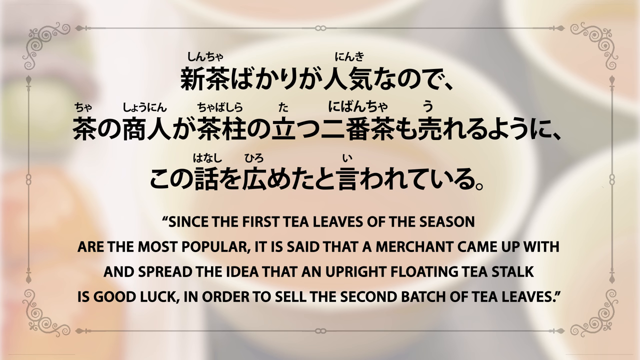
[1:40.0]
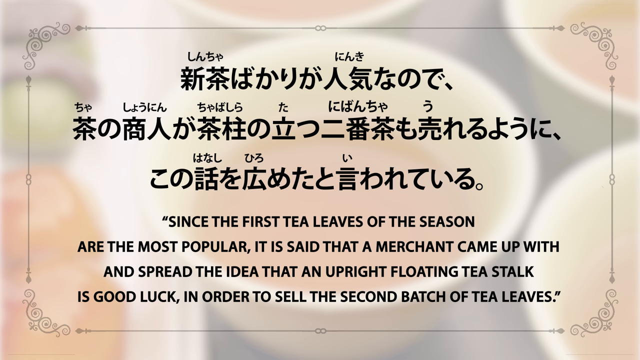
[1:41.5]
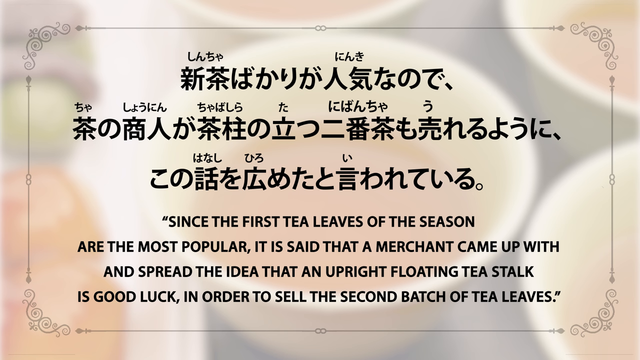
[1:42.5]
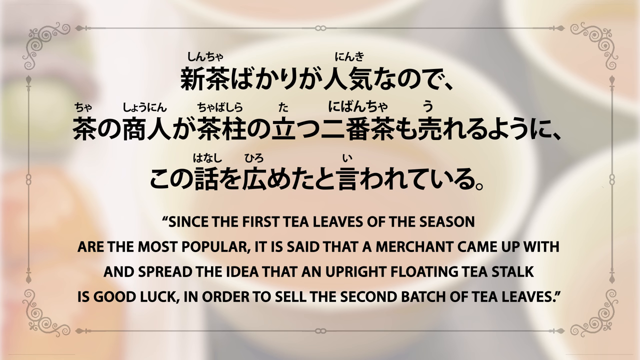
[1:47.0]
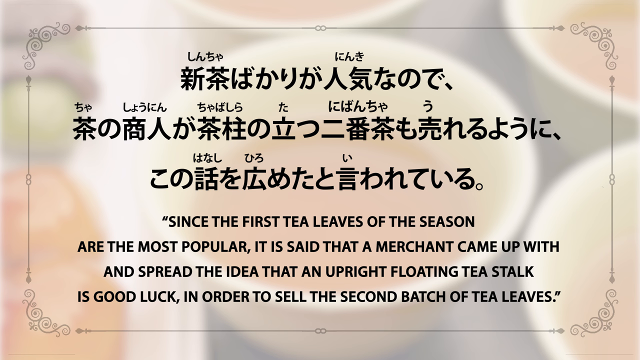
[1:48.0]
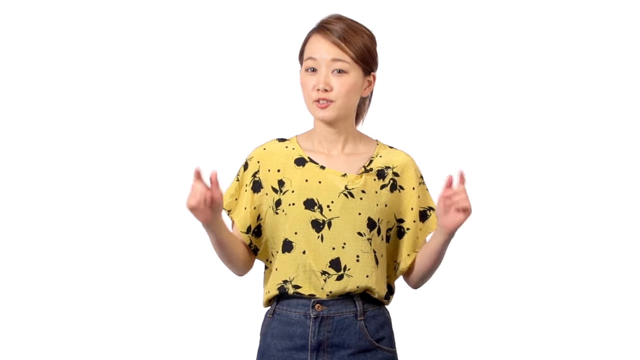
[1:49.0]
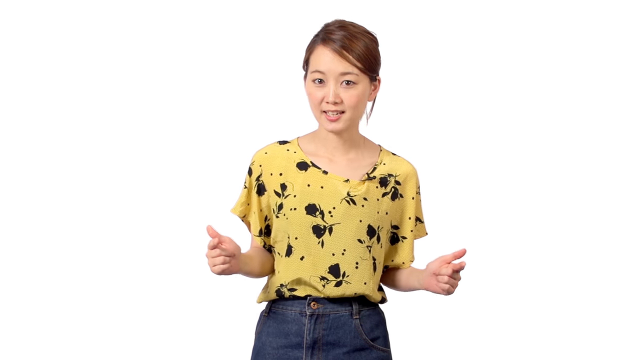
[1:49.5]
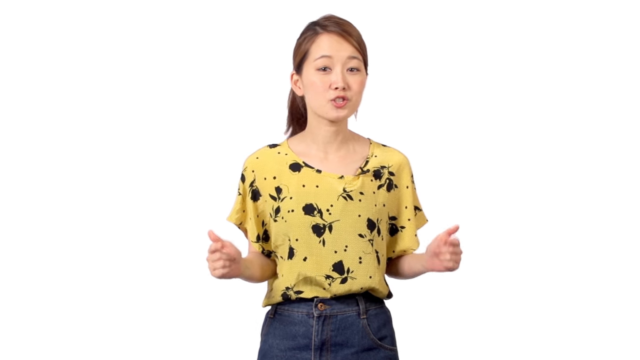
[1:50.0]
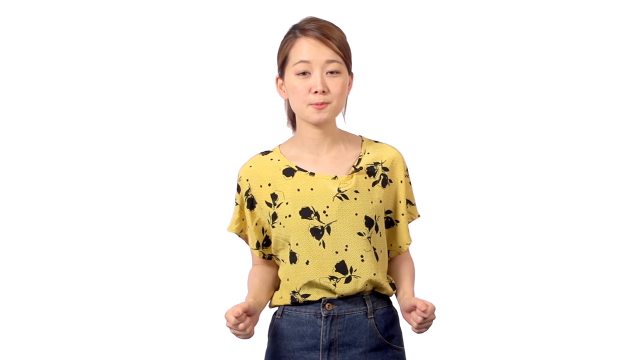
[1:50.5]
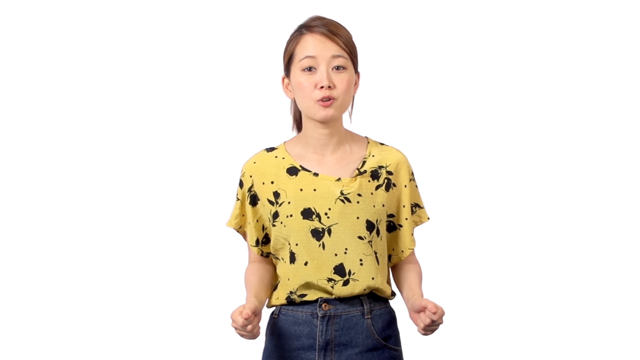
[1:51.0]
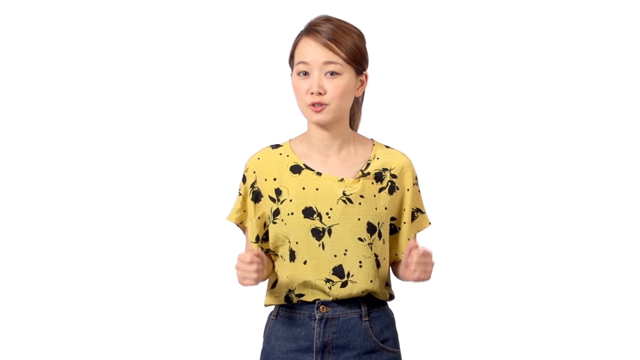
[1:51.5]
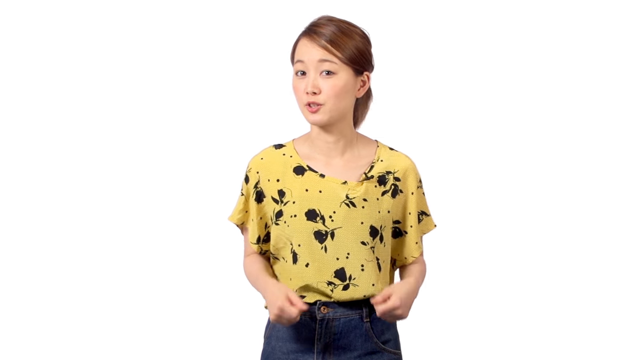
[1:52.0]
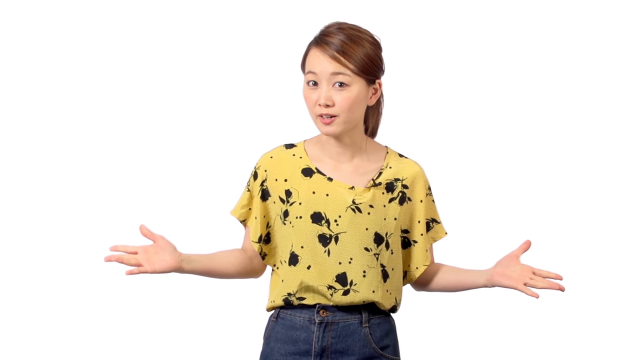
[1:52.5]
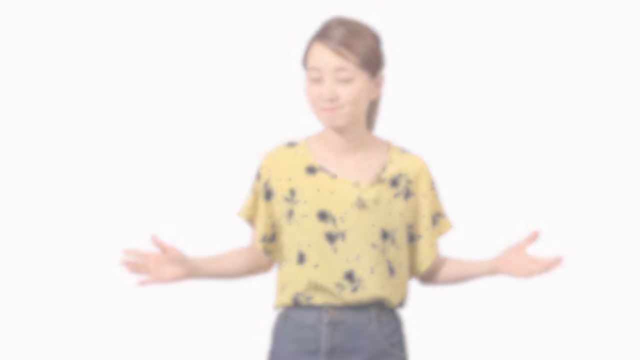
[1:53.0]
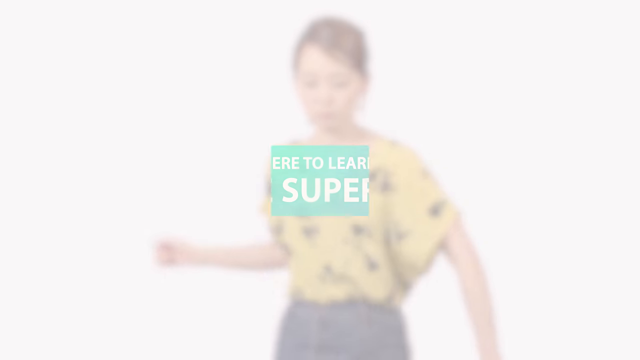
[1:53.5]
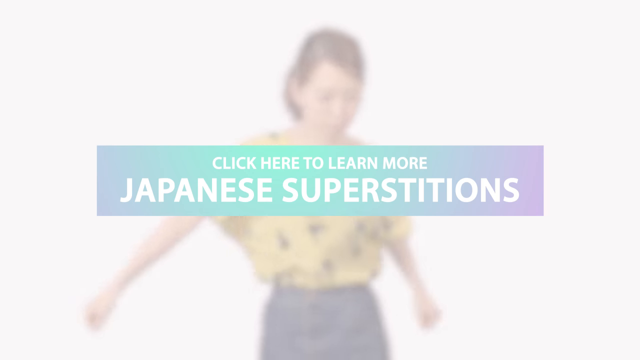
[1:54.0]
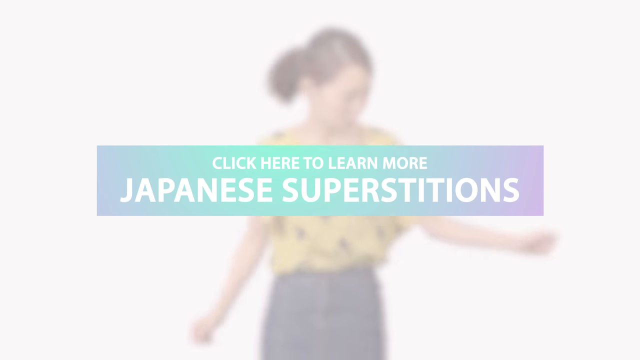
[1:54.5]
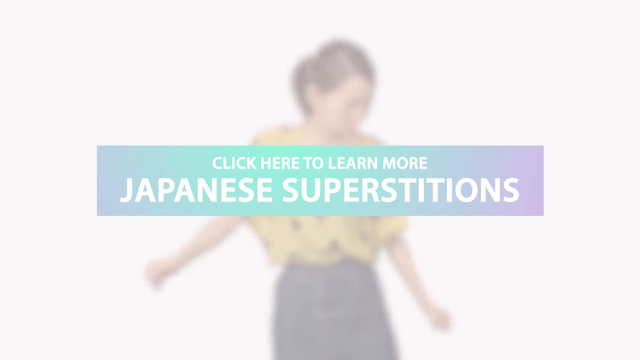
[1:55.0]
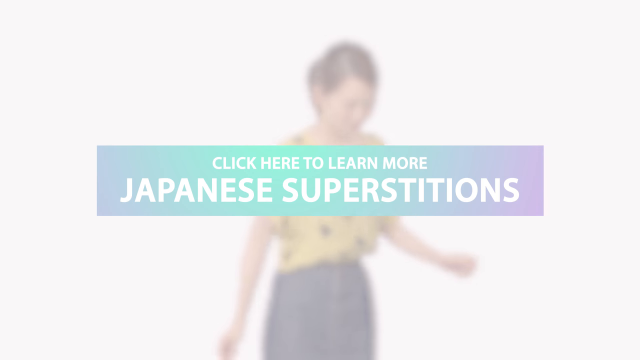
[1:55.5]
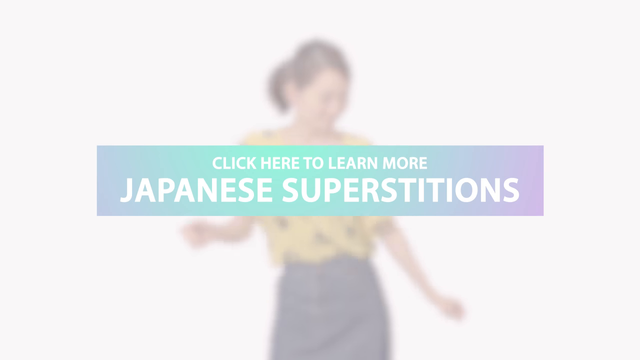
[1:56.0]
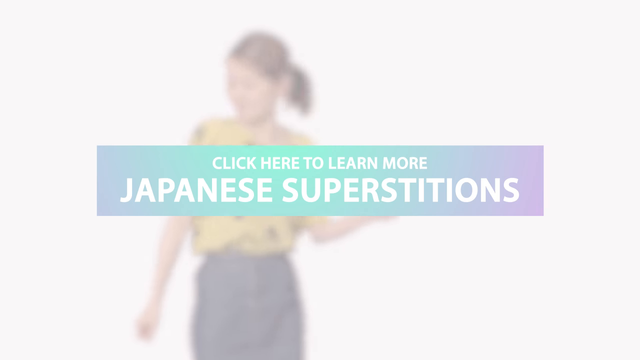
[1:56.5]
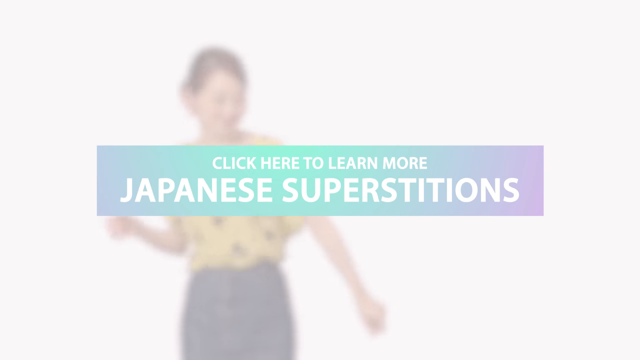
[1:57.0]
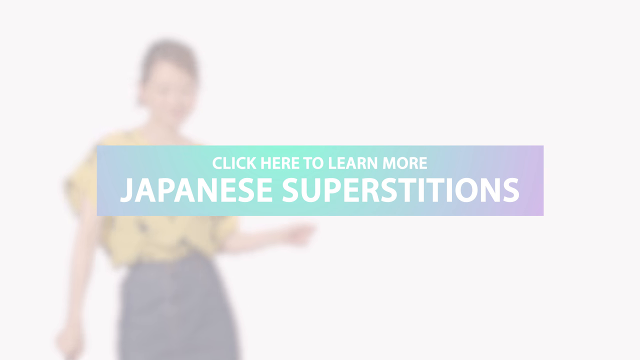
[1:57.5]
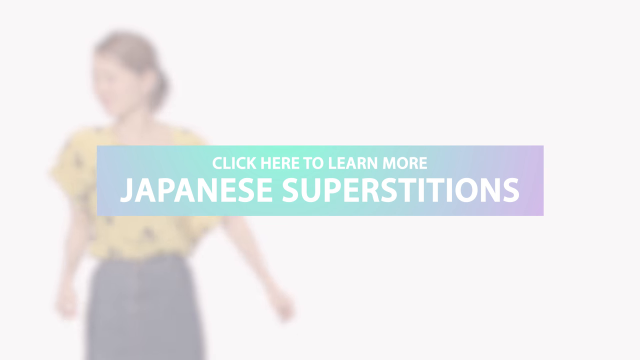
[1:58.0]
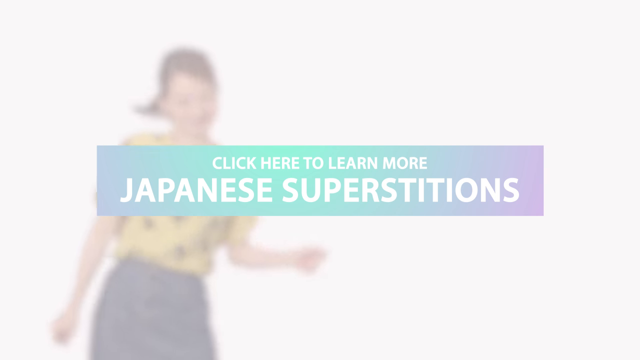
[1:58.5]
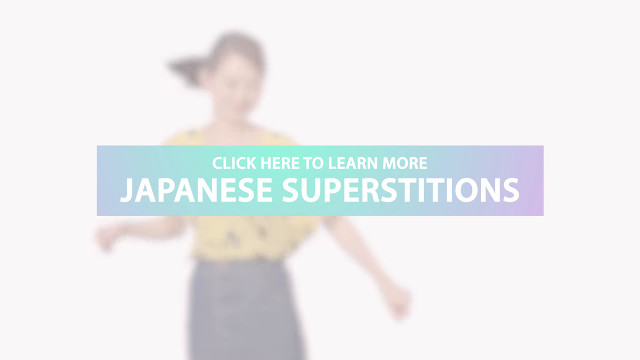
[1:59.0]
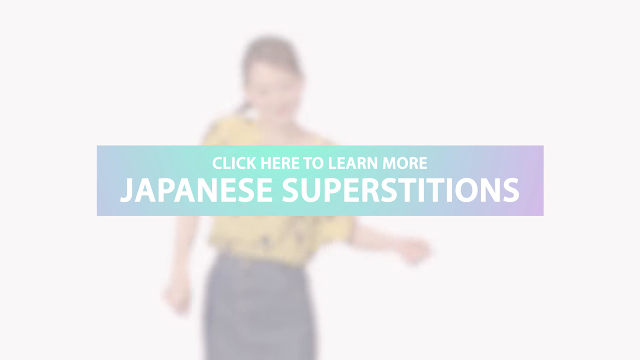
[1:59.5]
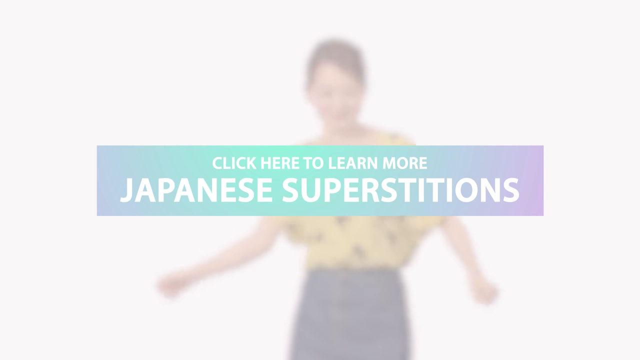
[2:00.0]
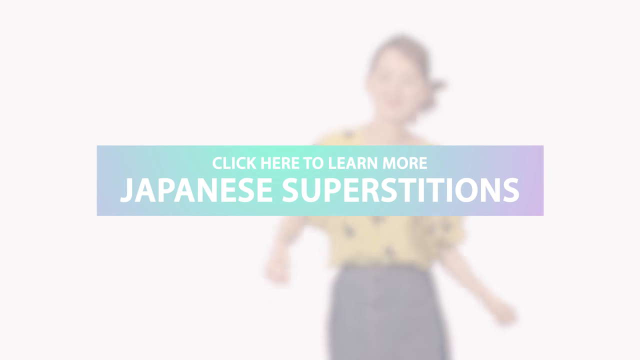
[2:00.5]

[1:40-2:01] The slide of Japanese text translated into English reads "Since the first tea leaves of the season are the most popular, it is said that a merchant came up with" and continues "the idea that an upright floating tea stalk is good luck in order to sell the second". After the slide, the woman appears on the white background. She is Asian, with brown hair, brown eyes and white lips, wearing a yellow T-shirt with black flowers and dots and blue jeans. Text then reads "click here to learn more Japanese superstitions", while the woman dances in the background.